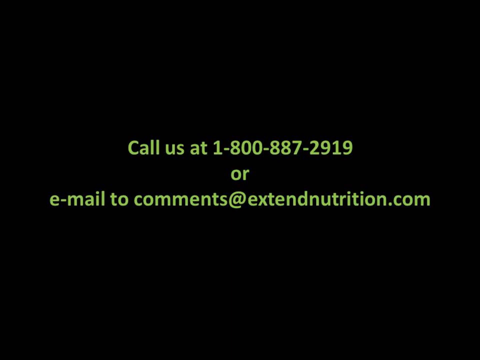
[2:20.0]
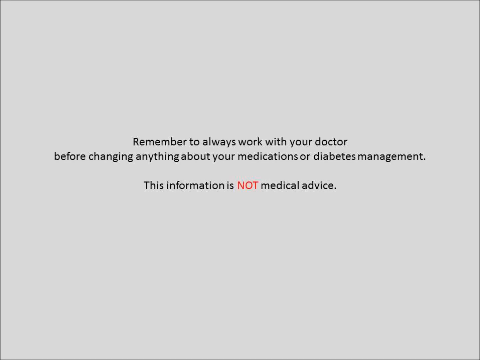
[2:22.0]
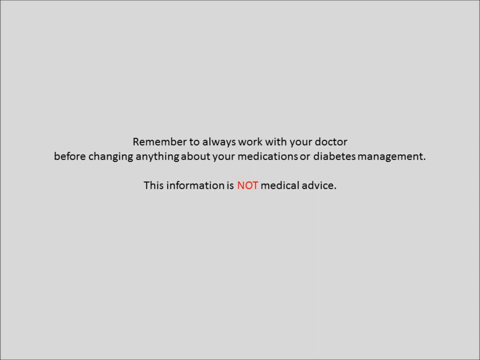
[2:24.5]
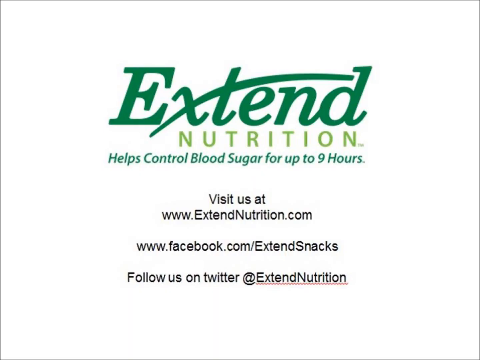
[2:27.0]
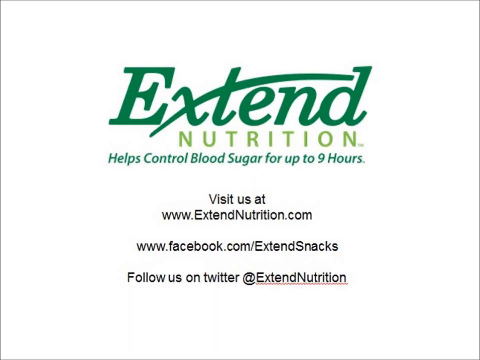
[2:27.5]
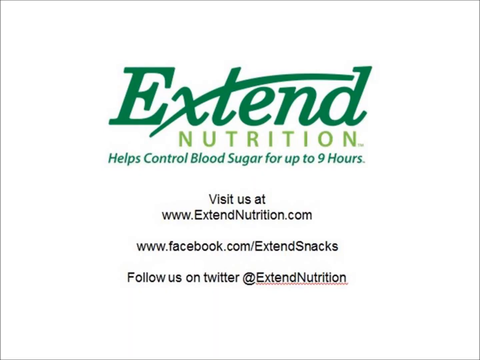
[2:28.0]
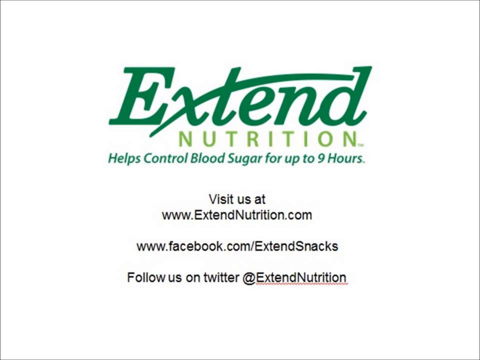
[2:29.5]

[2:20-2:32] The video moves from the contact screen to a white screen with text: "Remember to always work with your doctor before changing anything about your medications or diabetes management. This information is not medical advice." That screen stays up. Then comes what is essentially an ad for the company: "Extend Nutrition, help control blood sugar for up to nine hours. Visit us at ExtendedNutrition.com, www.facebook.com\Extend Snacks. Follow us on Twitter at Extend Nutrition." It then returns to the black screen with the "call us at" contact information.